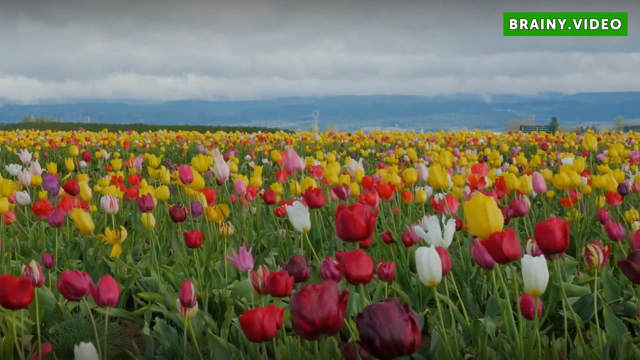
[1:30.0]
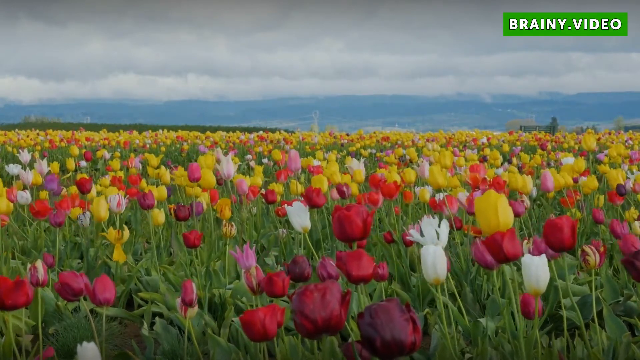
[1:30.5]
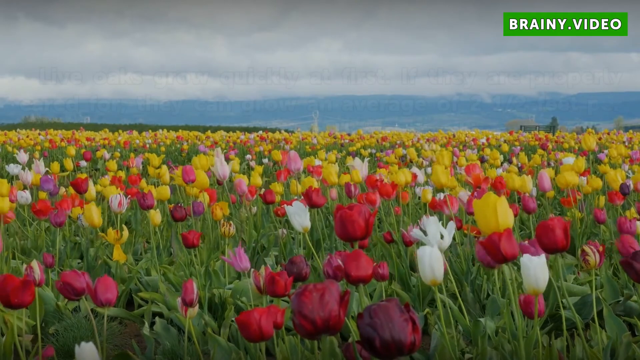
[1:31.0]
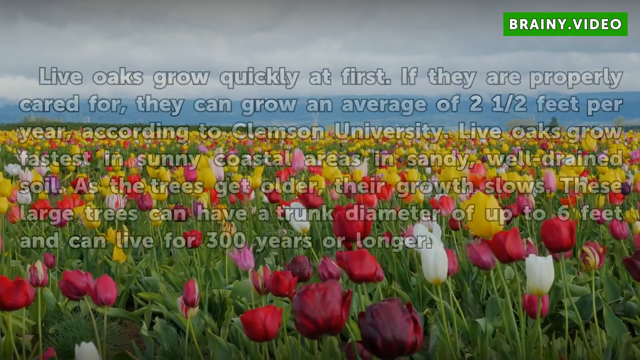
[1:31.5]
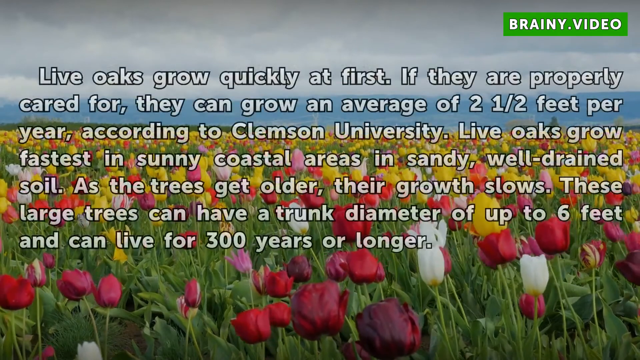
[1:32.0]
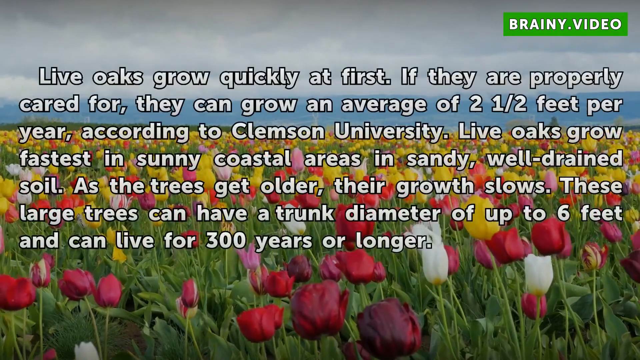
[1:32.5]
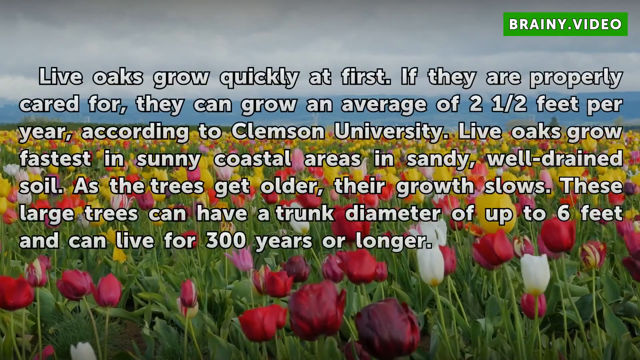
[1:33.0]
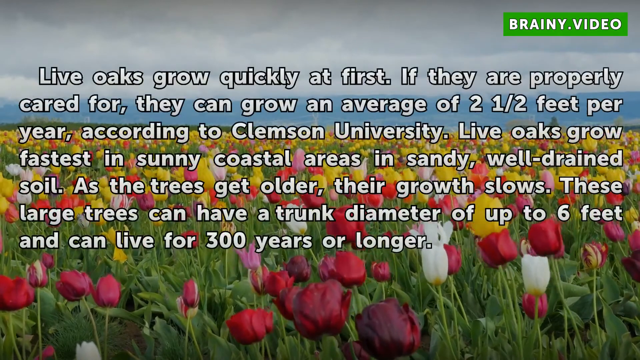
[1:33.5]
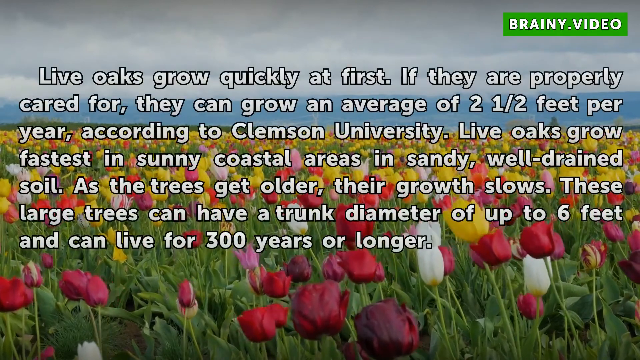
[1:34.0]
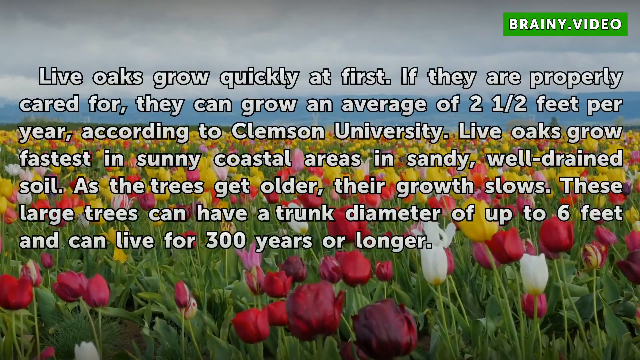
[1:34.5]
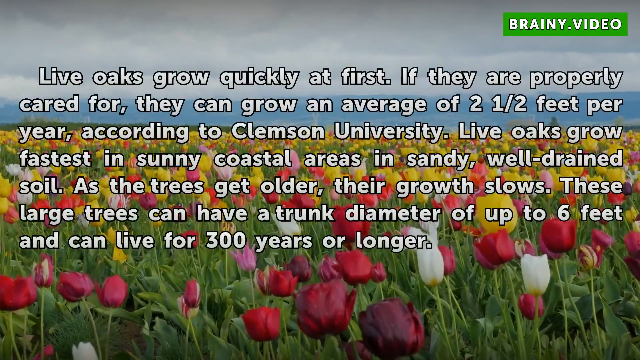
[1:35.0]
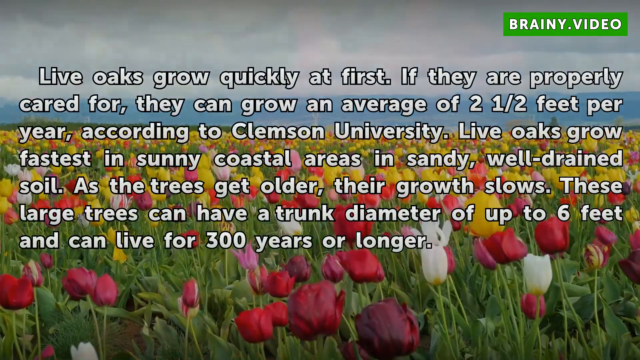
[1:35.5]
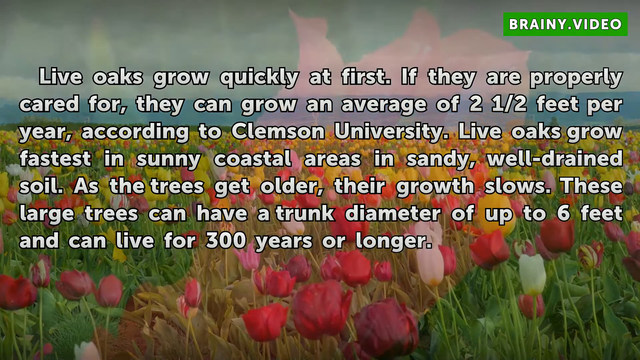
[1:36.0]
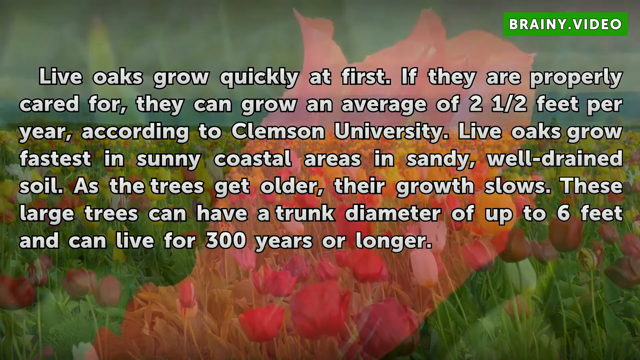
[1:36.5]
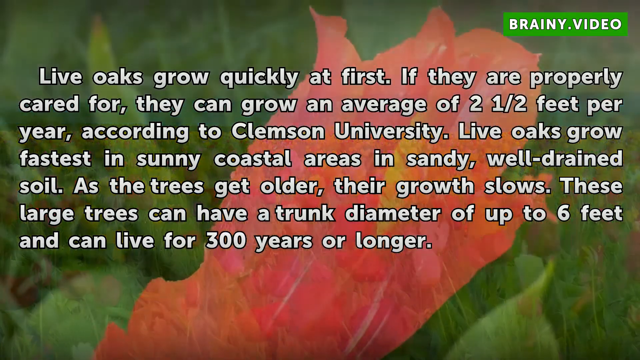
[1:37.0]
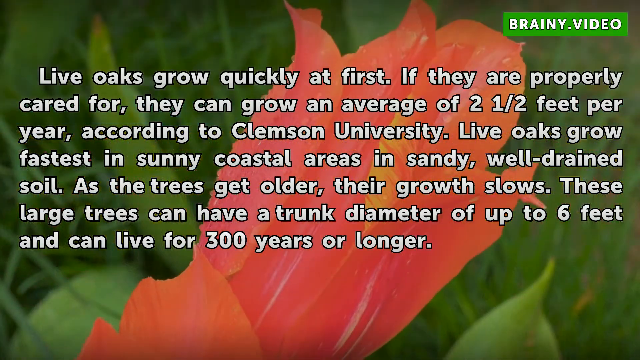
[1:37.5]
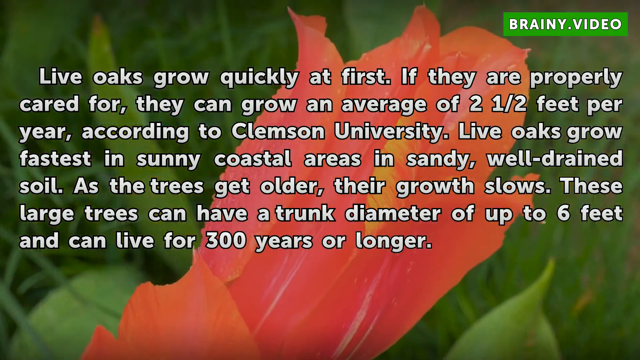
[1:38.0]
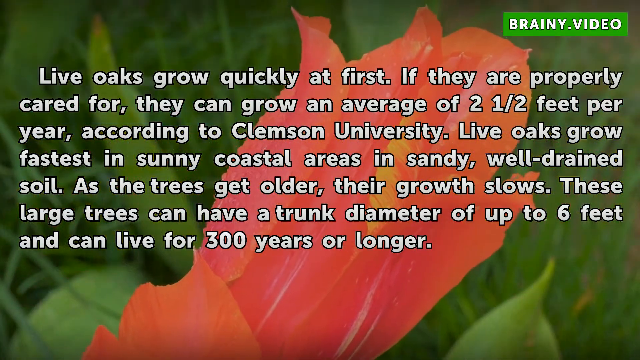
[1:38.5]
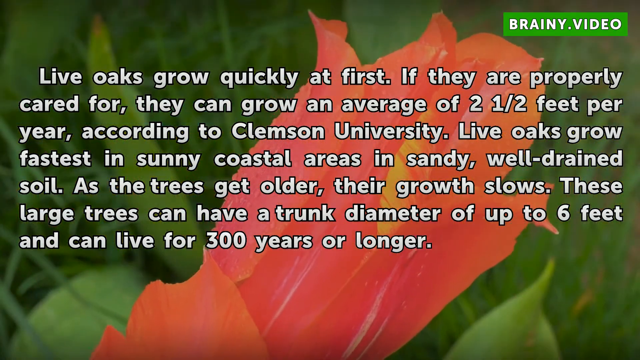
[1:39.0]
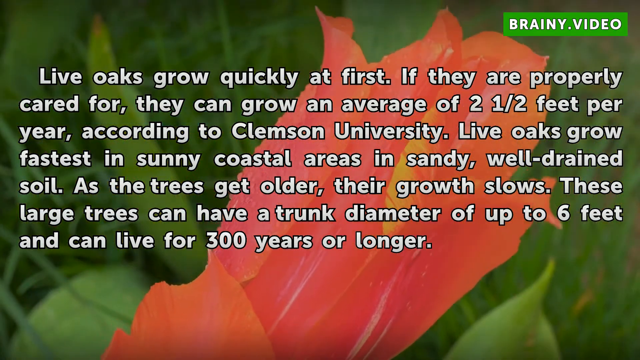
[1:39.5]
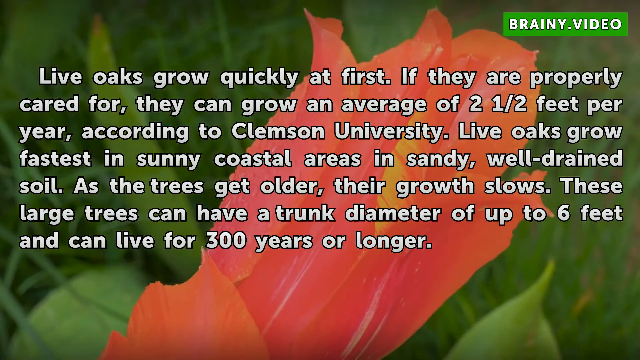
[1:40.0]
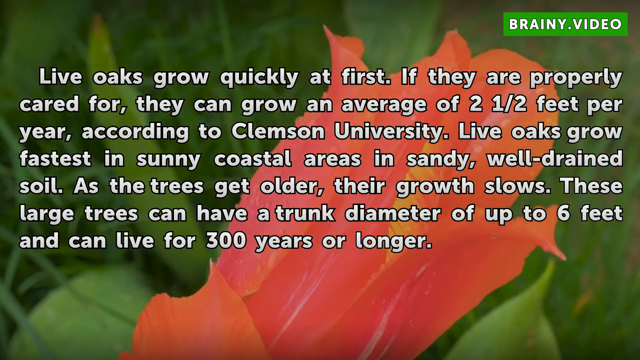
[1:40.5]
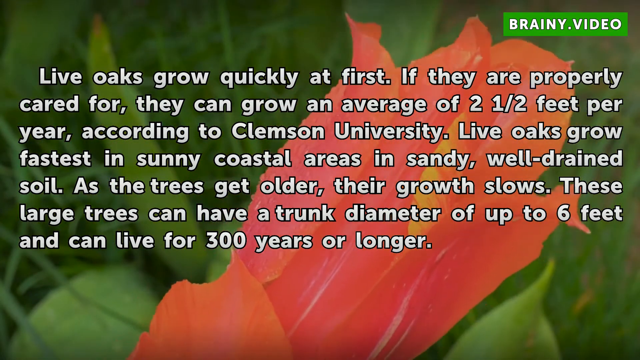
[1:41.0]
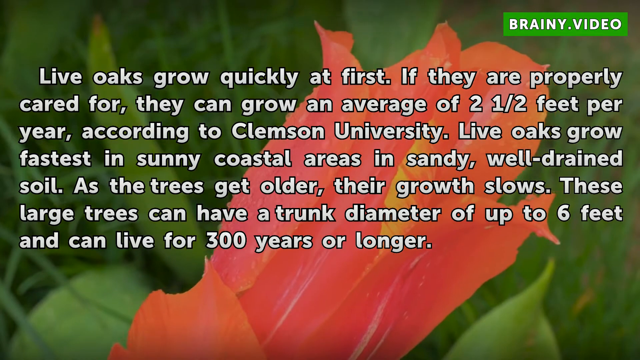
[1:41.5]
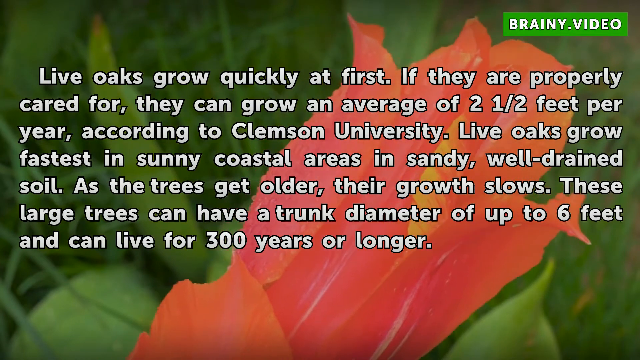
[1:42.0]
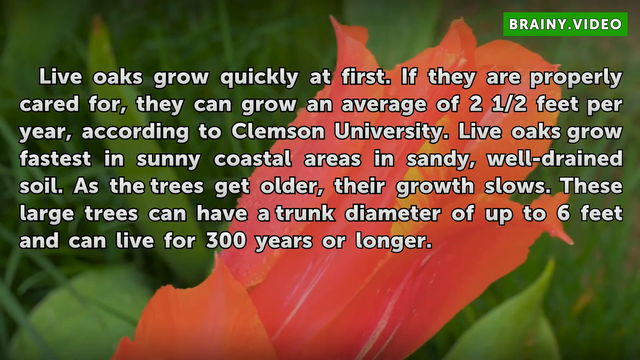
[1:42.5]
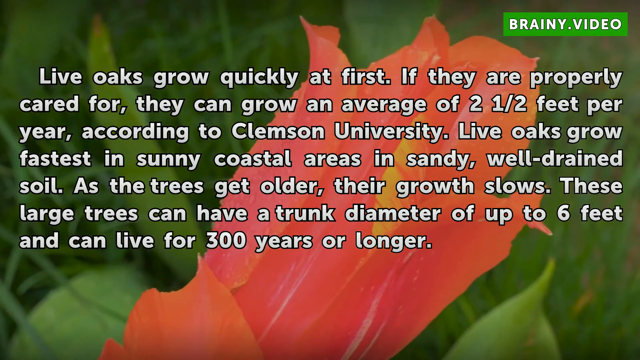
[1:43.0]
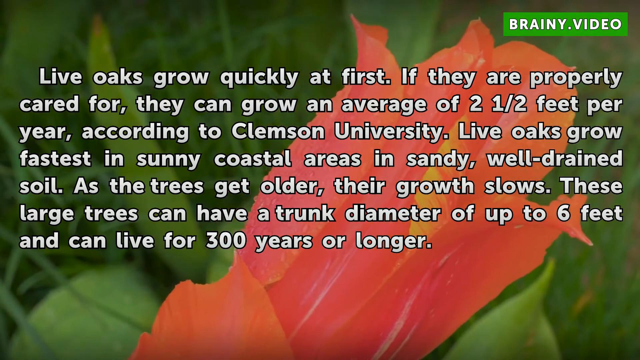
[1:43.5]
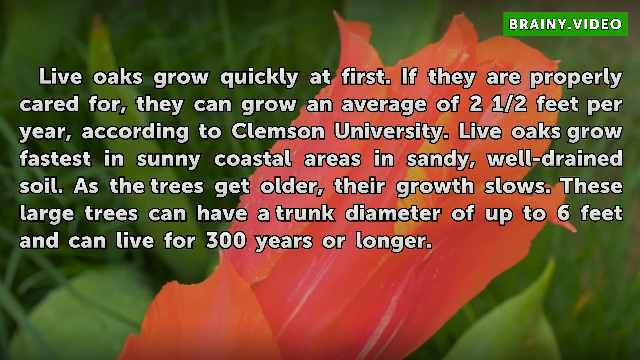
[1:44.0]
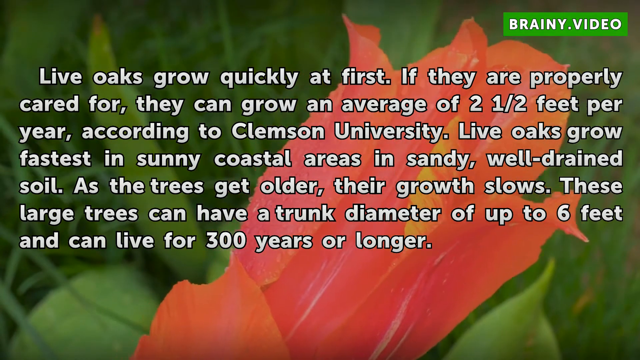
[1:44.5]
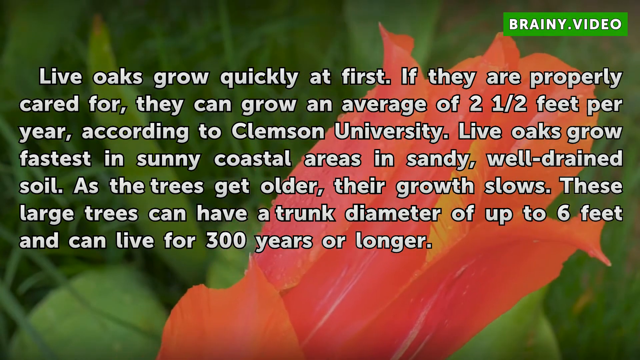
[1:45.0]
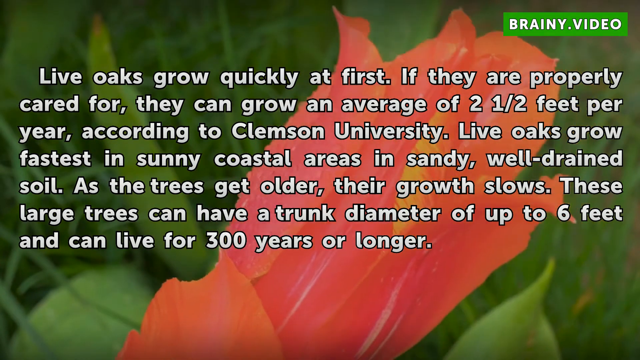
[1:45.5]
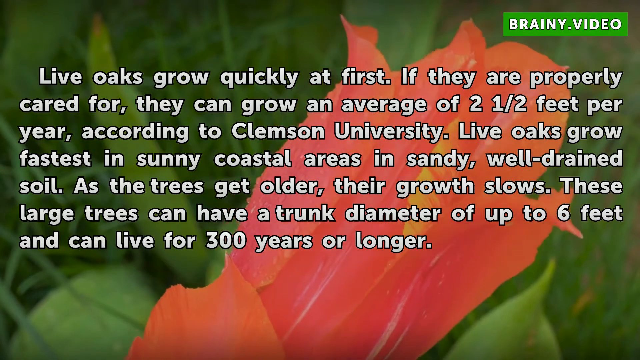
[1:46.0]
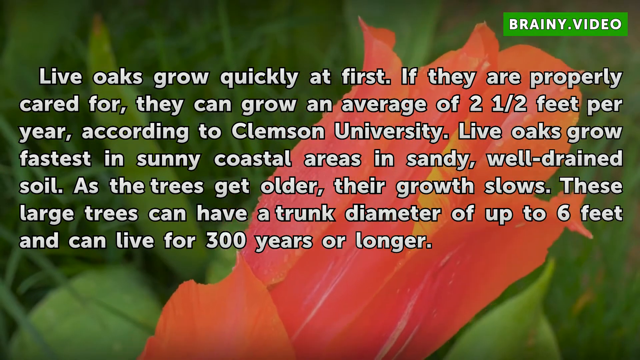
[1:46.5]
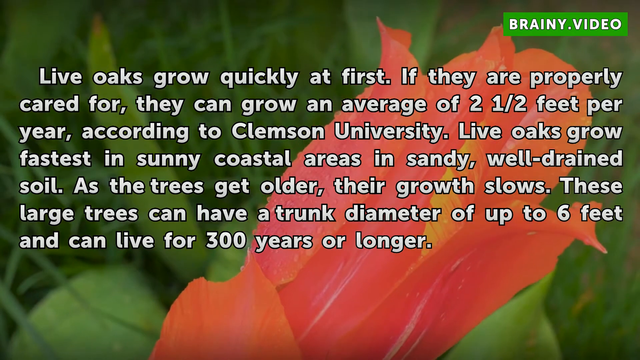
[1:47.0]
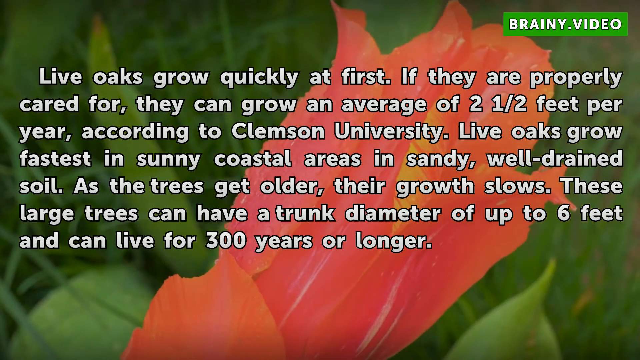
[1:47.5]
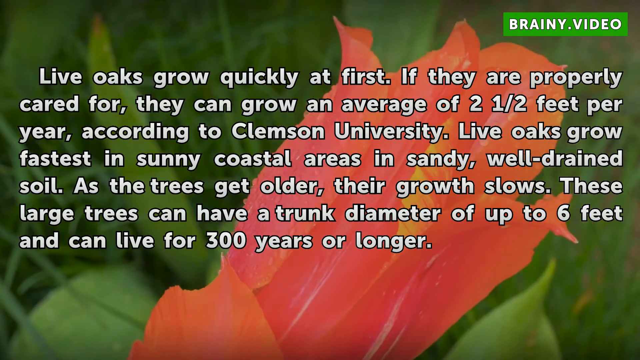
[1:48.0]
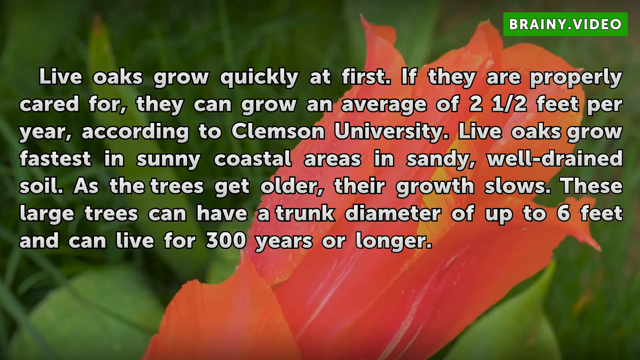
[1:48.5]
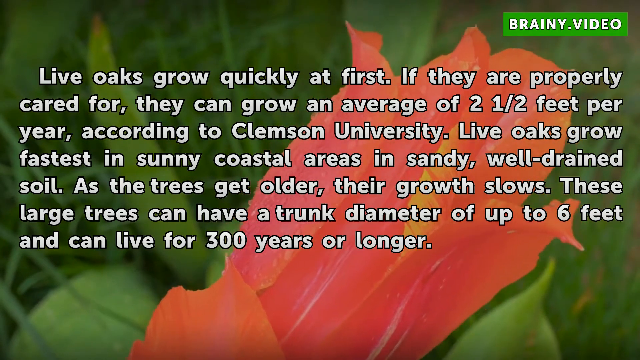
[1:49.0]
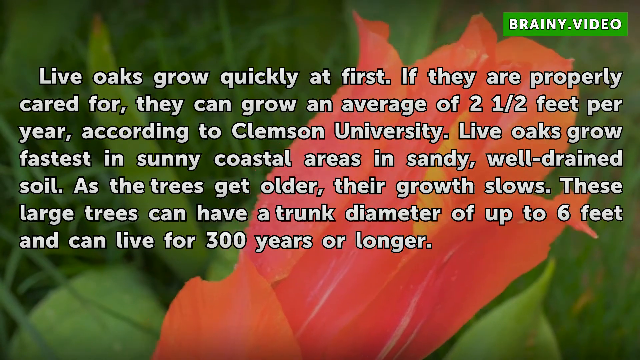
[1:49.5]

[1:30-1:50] Text appears: "live oaks grow quickly at first if they are properly cared for. They can grow an average of two and a half feet per year, according to Clemson University. Live oaks grow fastest in sunny coastal areas in sandy, well-drained soil. As the trees get older, their growth slows. These large trees can have a trunk diameter of up to six feet and can live for 300 years or longer." The flowers in the background move and sway with the wind. The background video then changes to a very close-up view of a light red flower moving around in the wind, with green plants and grass beyond it in a very blurry background. The same text remains on screen.